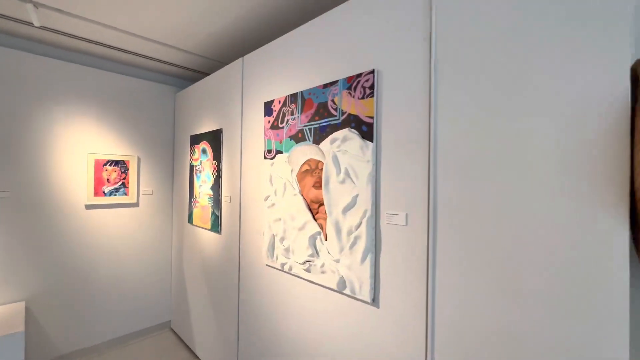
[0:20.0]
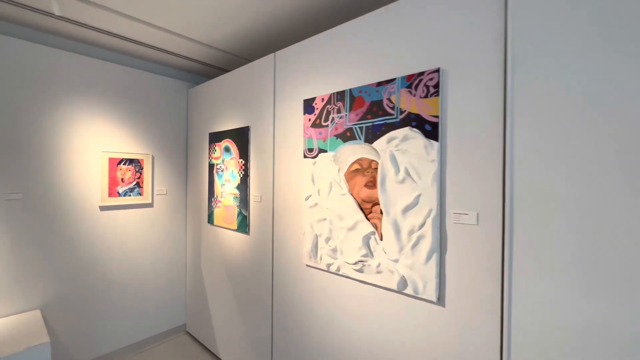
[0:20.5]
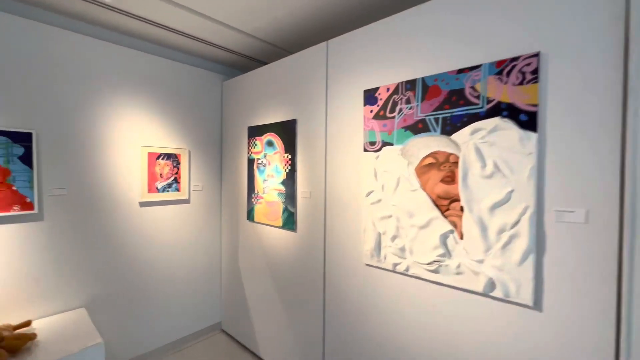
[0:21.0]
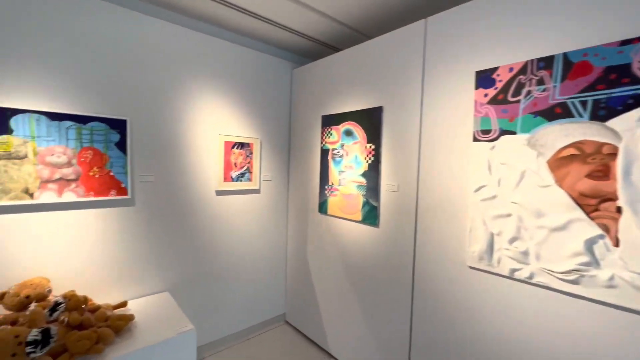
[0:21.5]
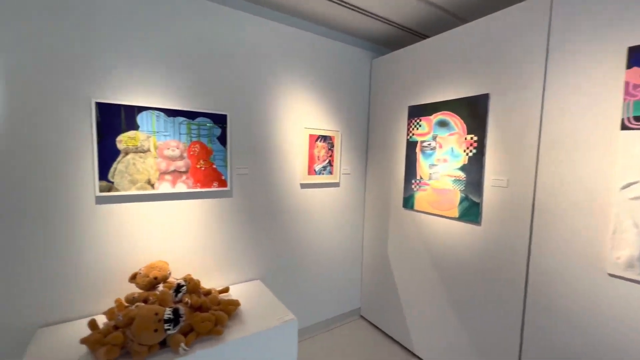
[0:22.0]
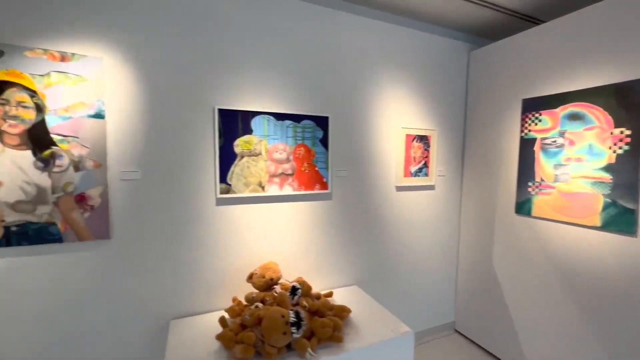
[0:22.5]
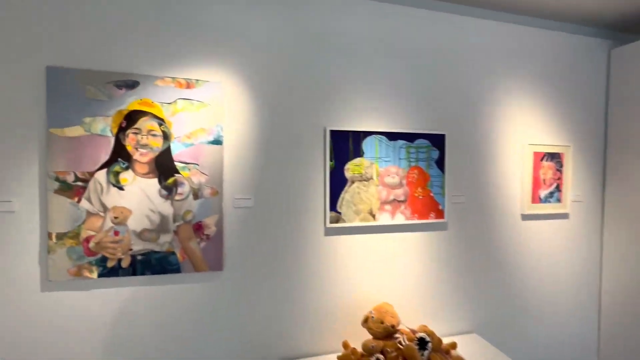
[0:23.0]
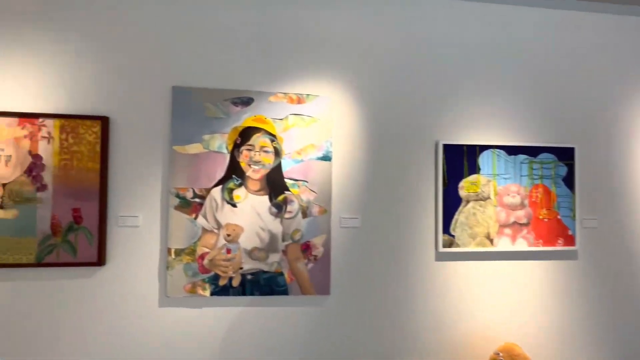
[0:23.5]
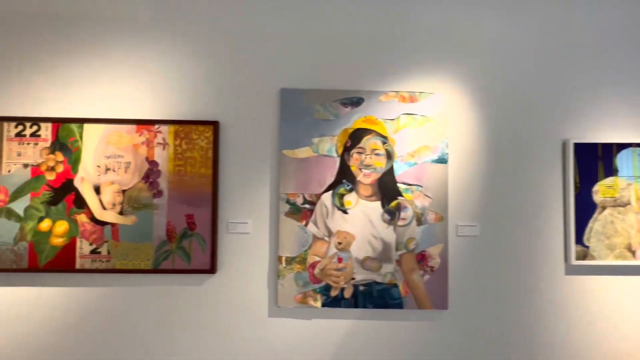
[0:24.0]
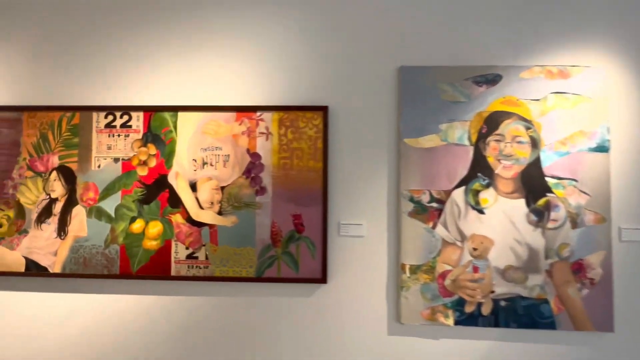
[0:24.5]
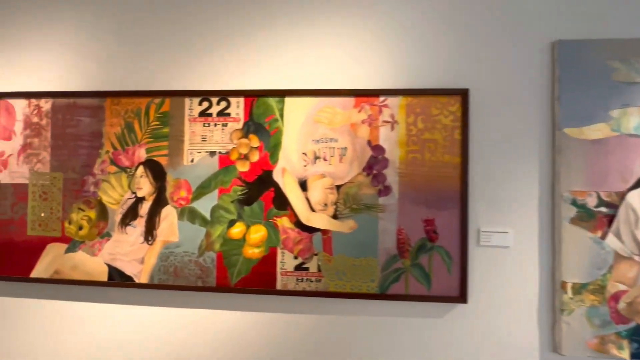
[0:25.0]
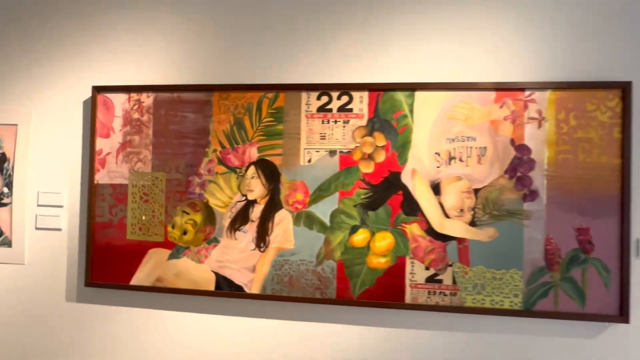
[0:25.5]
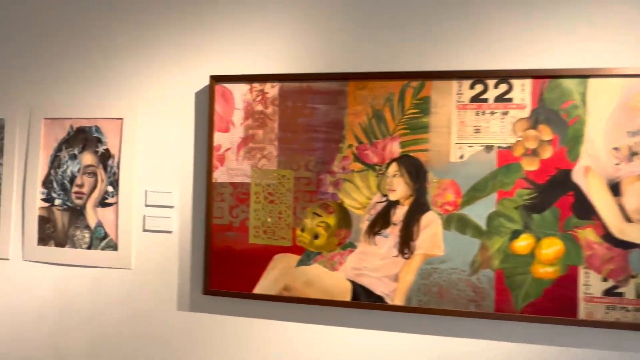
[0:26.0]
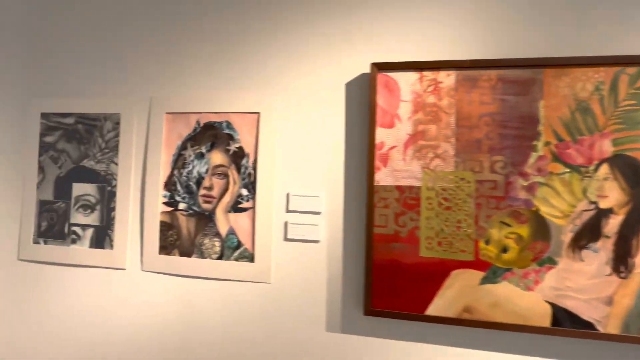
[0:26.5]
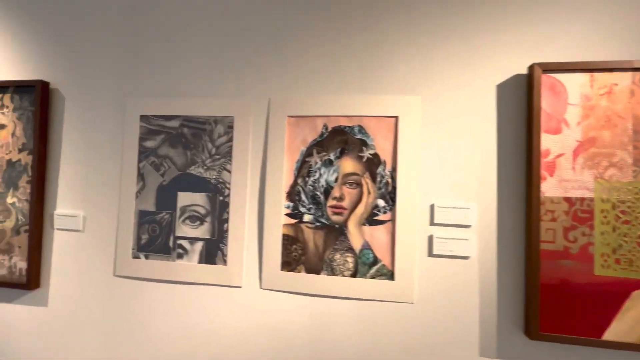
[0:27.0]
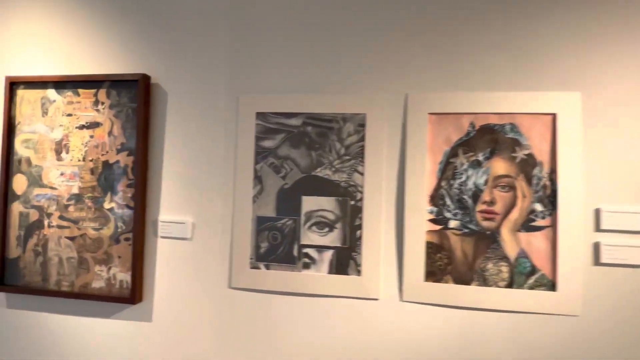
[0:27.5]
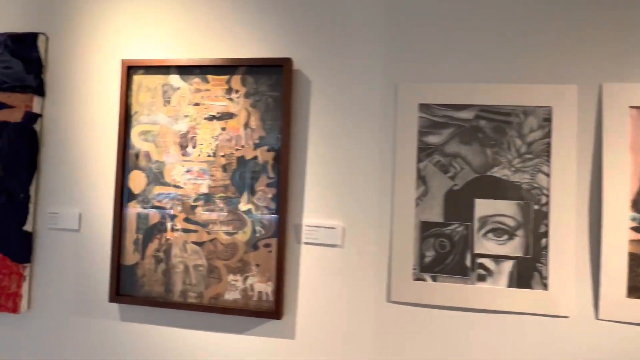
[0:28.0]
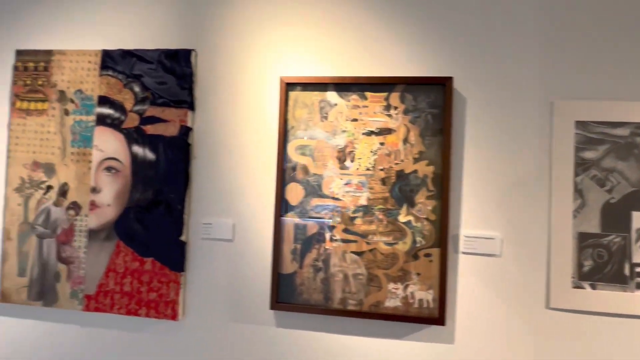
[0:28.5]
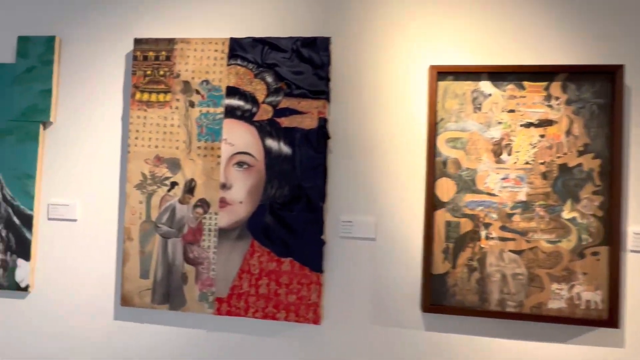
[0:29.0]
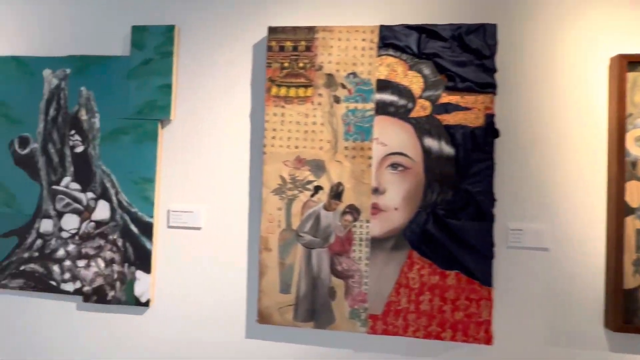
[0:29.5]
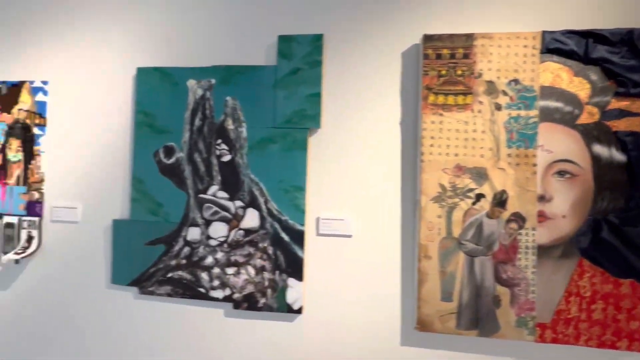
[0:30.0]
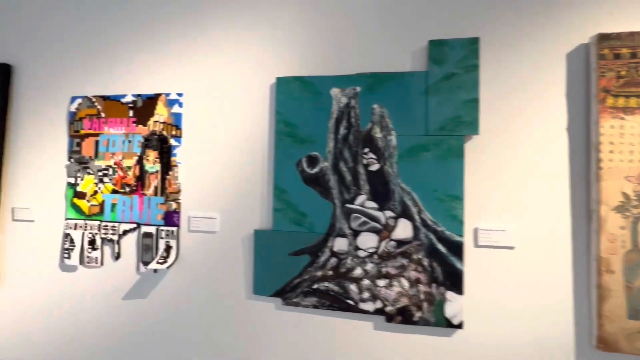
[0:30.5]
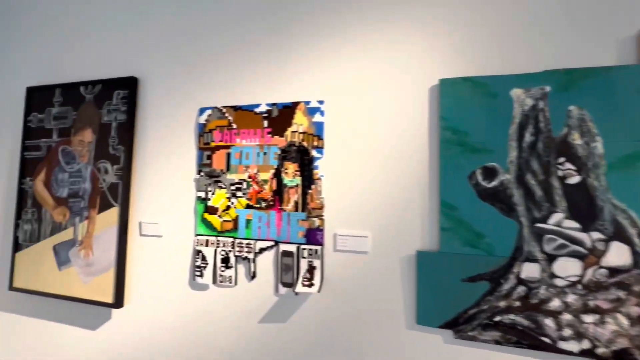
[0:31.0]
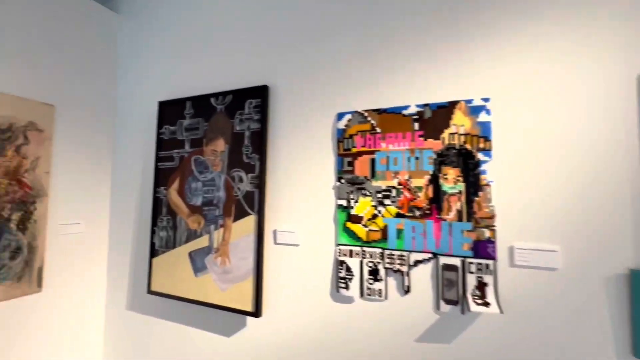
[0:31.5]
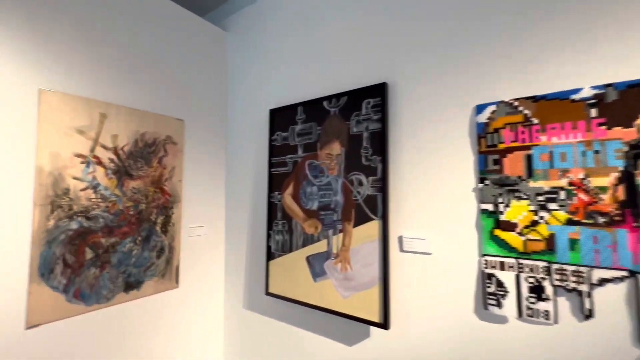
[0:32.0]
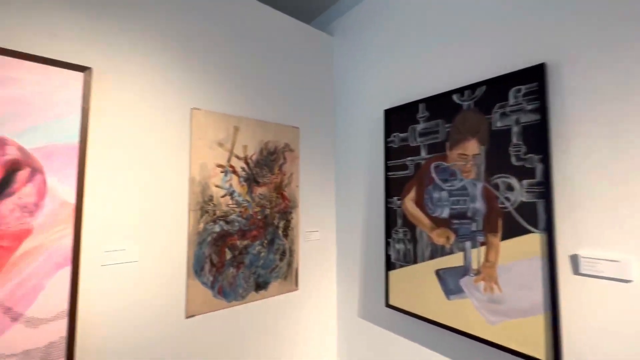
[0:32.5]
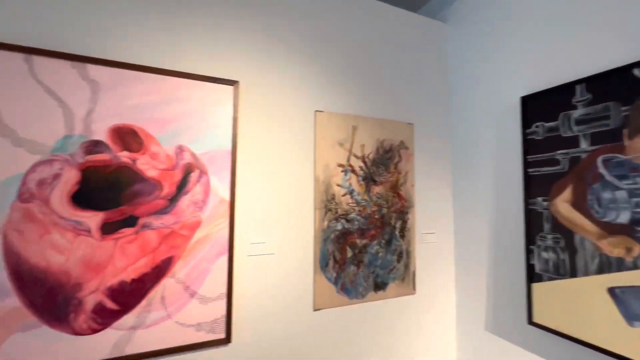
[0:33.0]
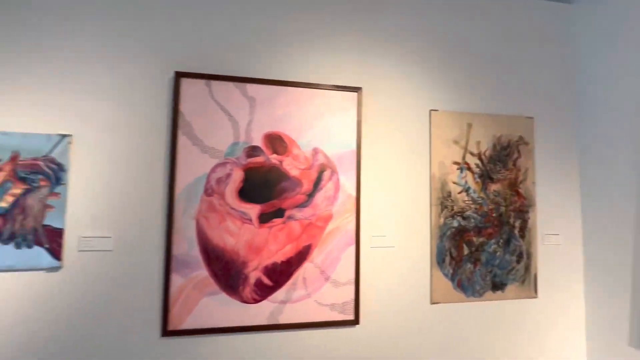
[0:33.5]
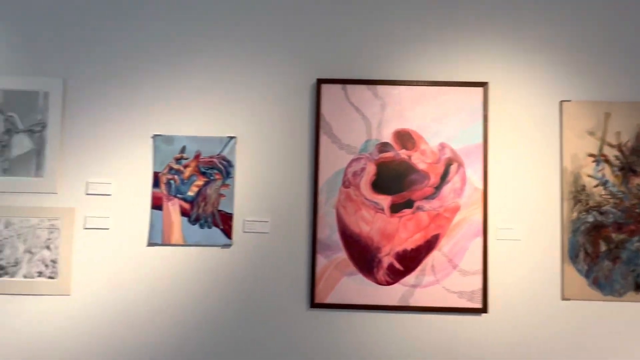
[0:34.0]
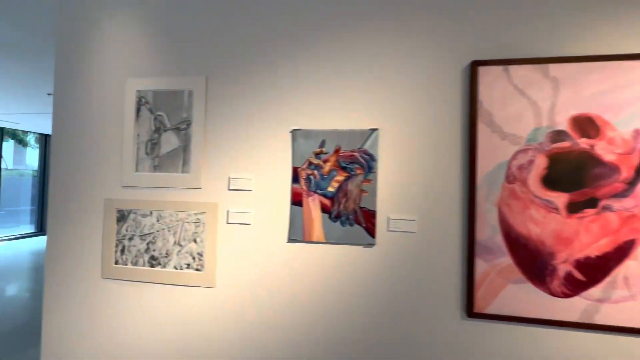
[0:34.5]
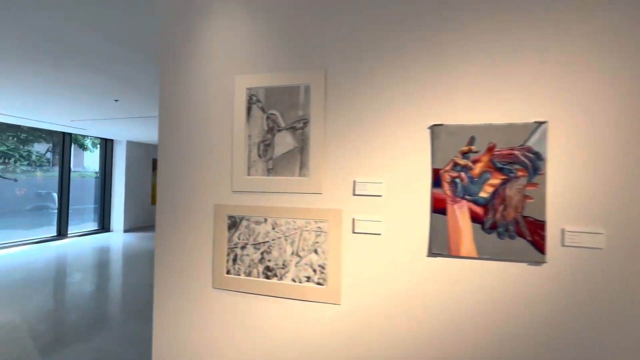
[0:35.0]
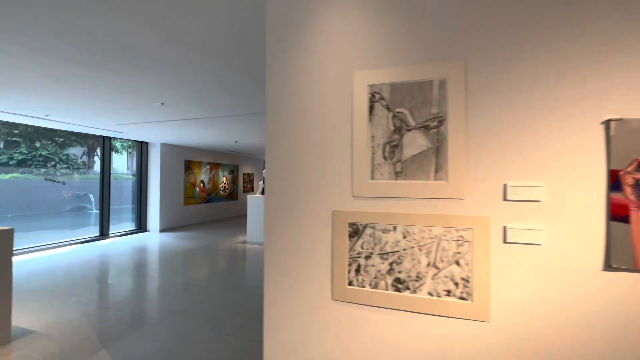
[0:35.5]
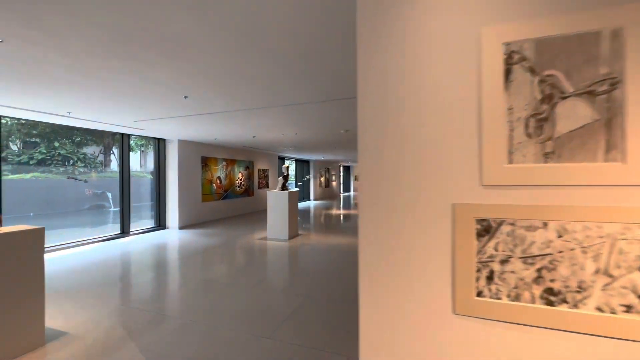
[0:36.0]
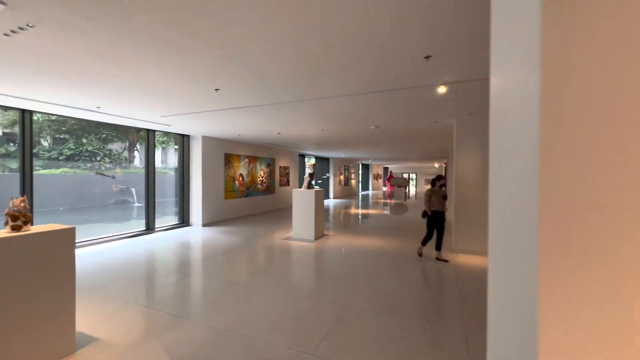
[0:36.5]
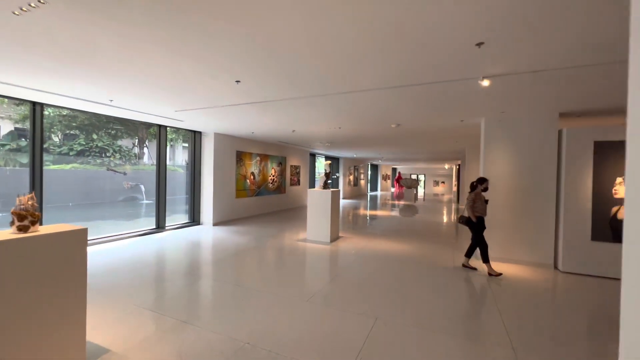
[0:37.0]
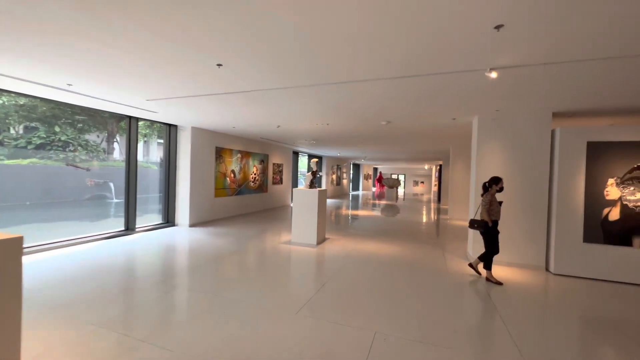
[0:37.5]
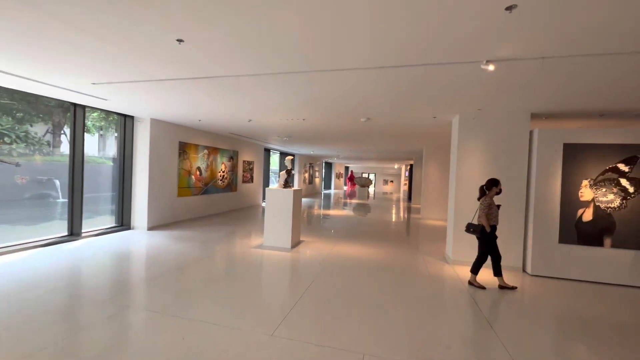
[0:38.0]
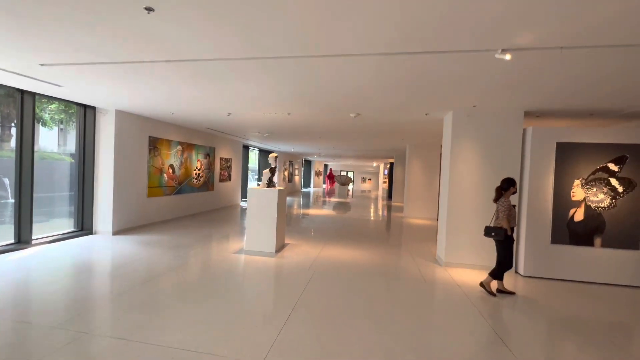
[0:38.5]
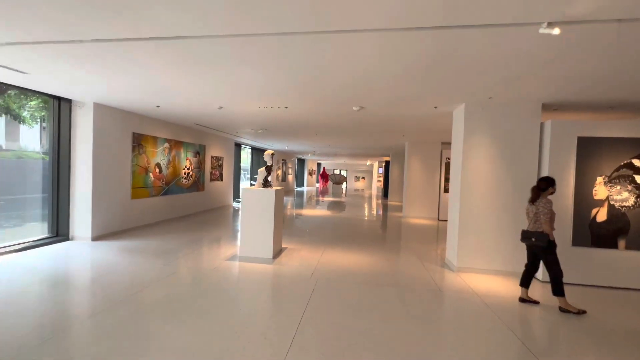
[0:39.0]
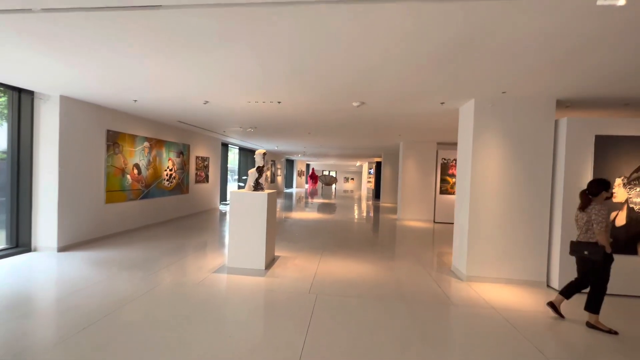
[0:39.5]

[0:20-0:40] The camera pans rapidly past the pictures in an art gallery. The pictures are very modern, some like 3D art, abstract in style. A woman wearing a mask browses around, looking at the pictures on display; she is the only person visible. On one side of the gallery are white rooms where the pictures are hung. On the other side is a glass wall with trees outside, and there might be a park out there. Each picture has its own light hanging over it that shines to illuminate it. There are boxes next to the pictures, presumably descriptions and titles of the pictures. Some podiums or columns in the middle of the museum have artwork displayed on top of them. The floors are white, just like the walls.